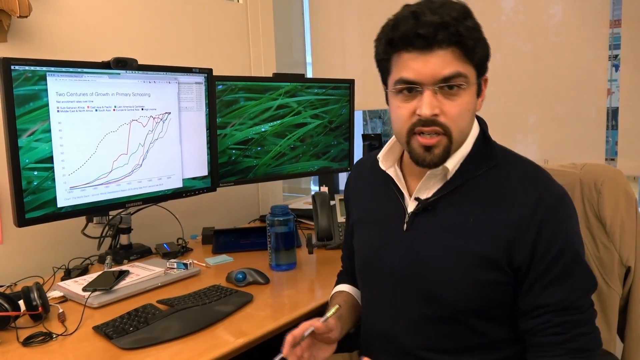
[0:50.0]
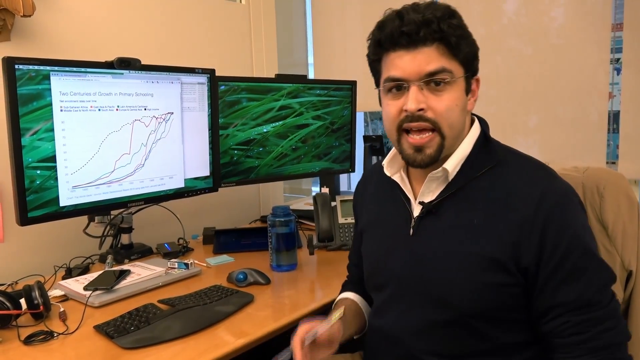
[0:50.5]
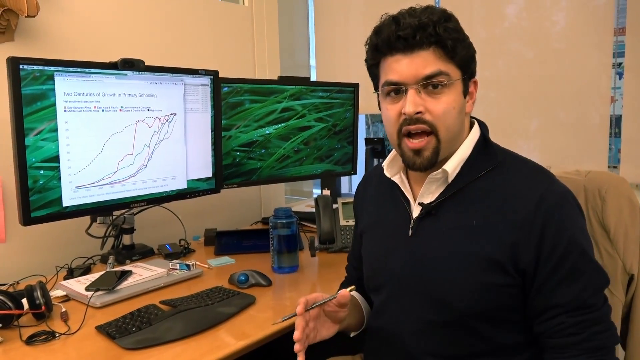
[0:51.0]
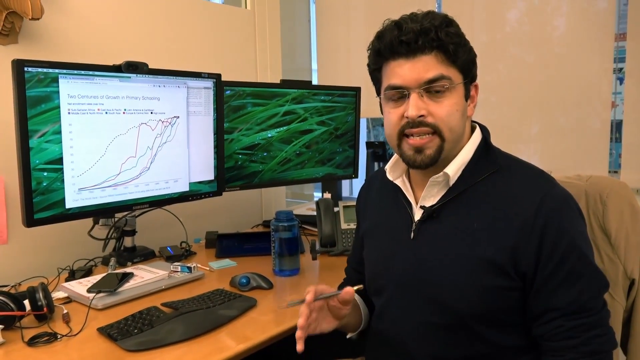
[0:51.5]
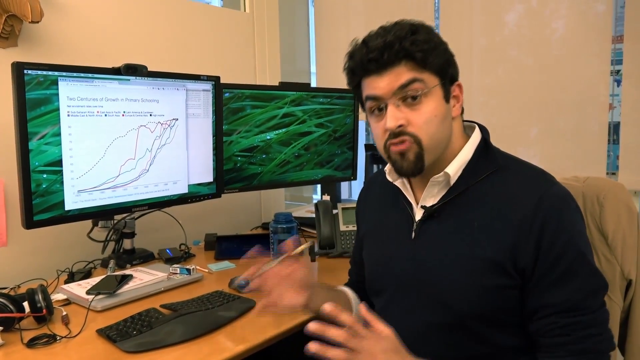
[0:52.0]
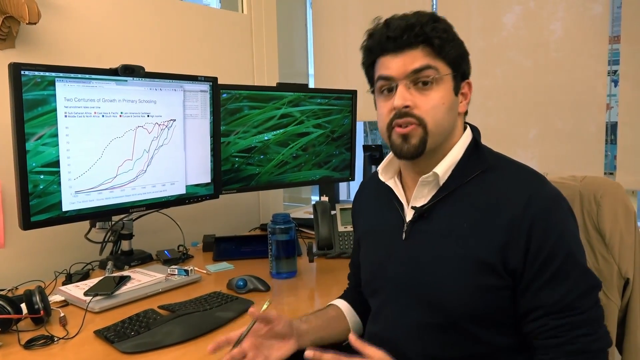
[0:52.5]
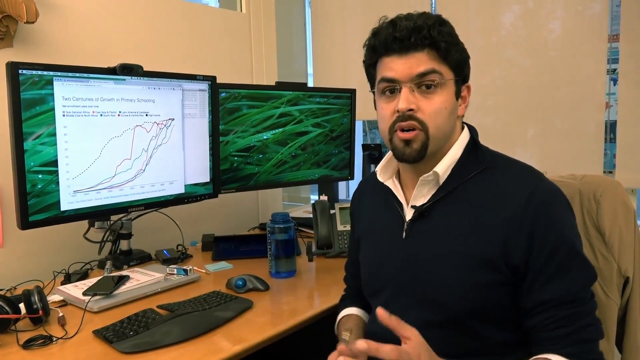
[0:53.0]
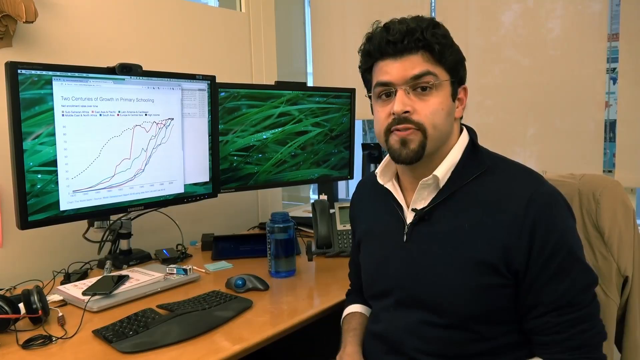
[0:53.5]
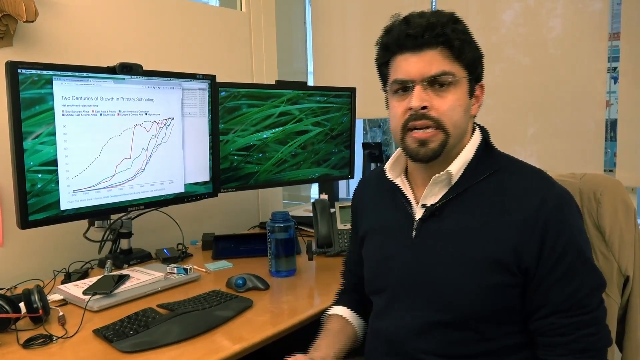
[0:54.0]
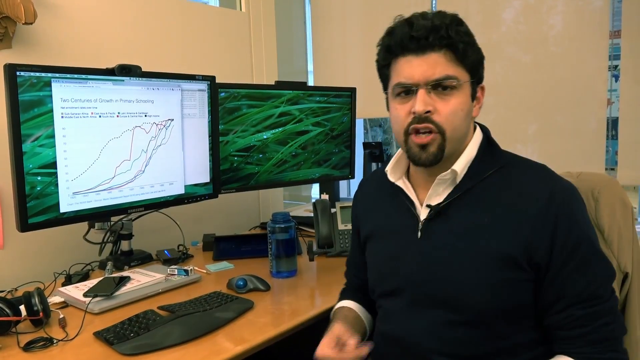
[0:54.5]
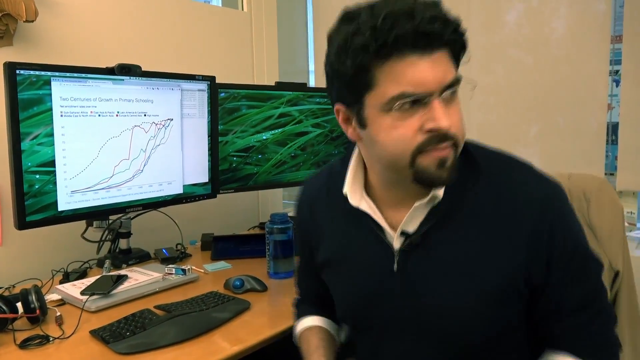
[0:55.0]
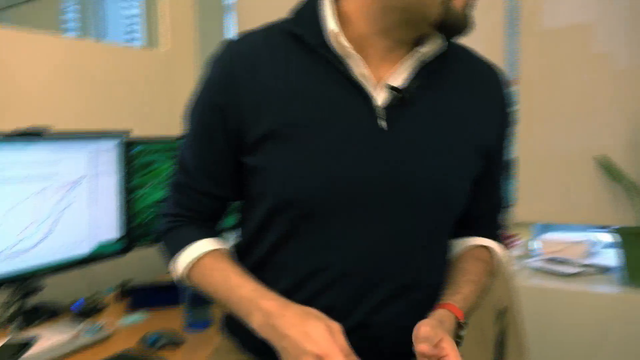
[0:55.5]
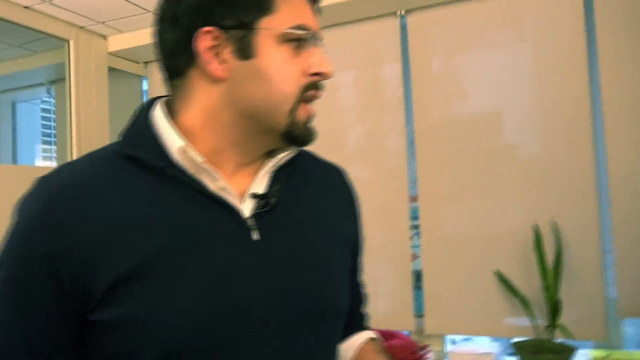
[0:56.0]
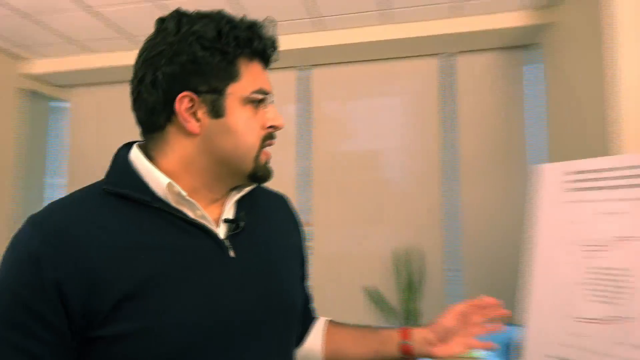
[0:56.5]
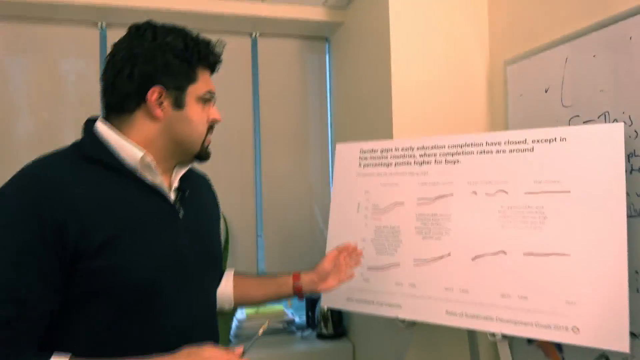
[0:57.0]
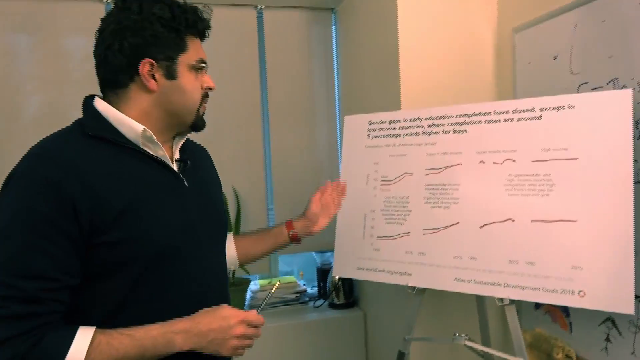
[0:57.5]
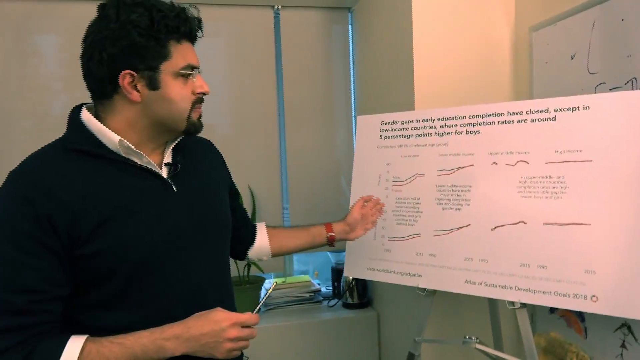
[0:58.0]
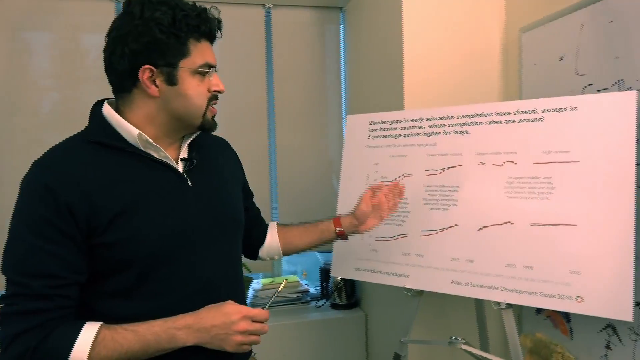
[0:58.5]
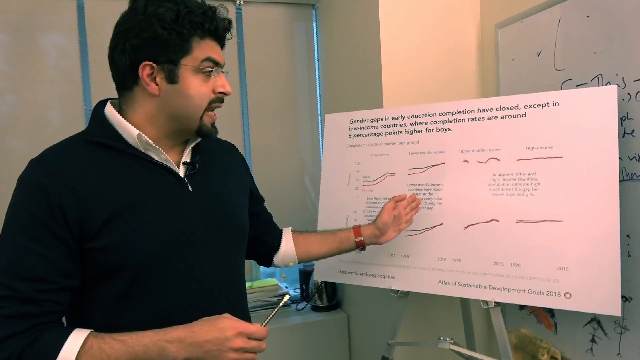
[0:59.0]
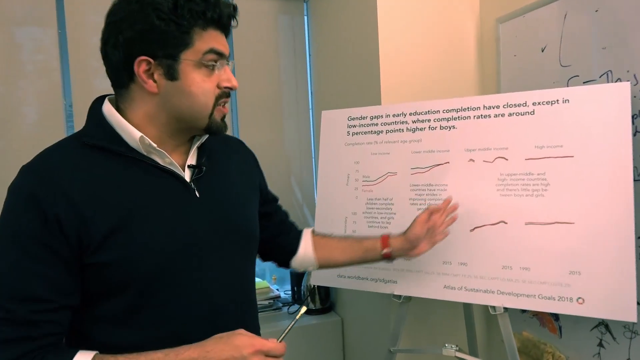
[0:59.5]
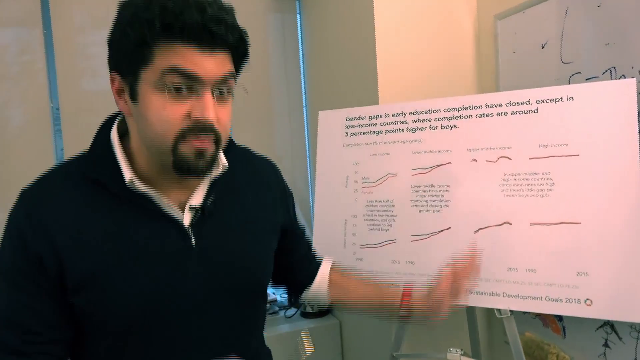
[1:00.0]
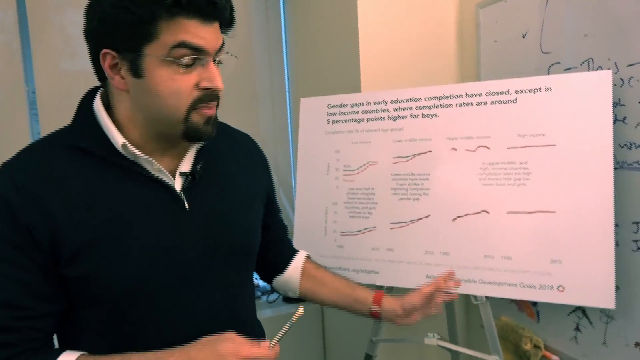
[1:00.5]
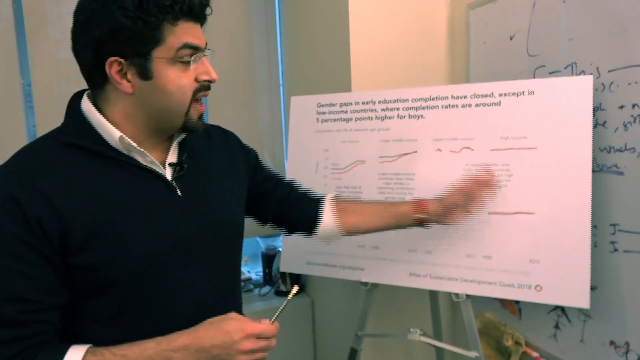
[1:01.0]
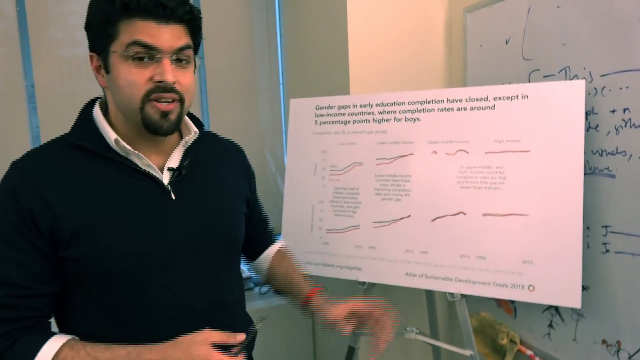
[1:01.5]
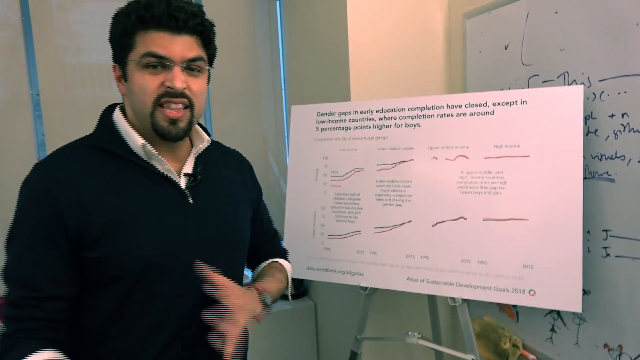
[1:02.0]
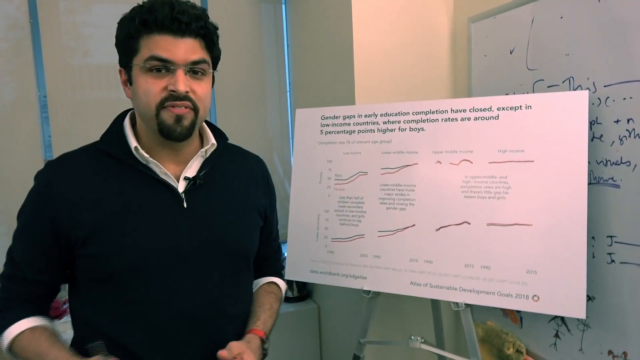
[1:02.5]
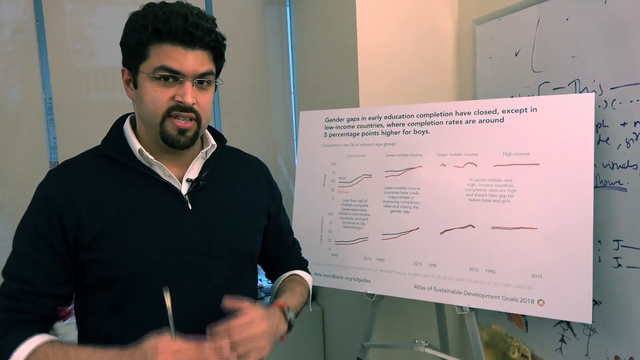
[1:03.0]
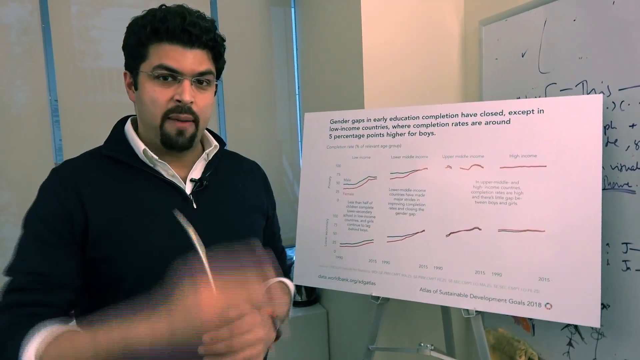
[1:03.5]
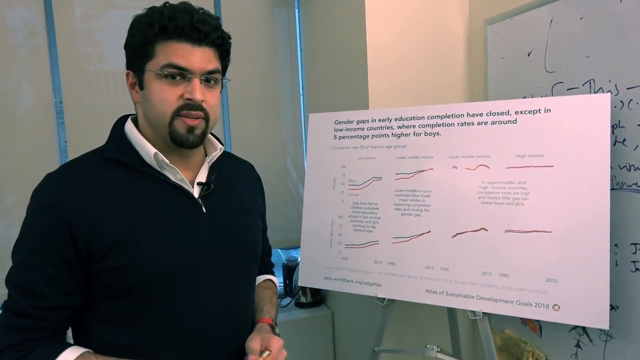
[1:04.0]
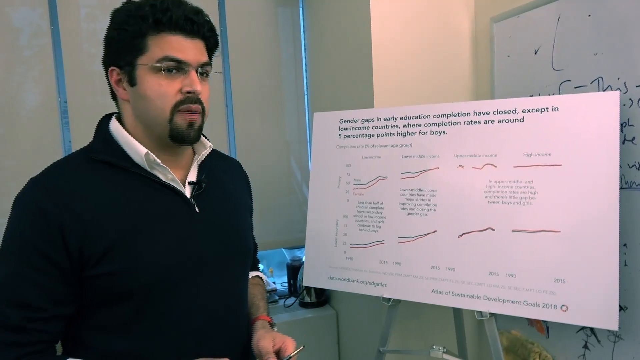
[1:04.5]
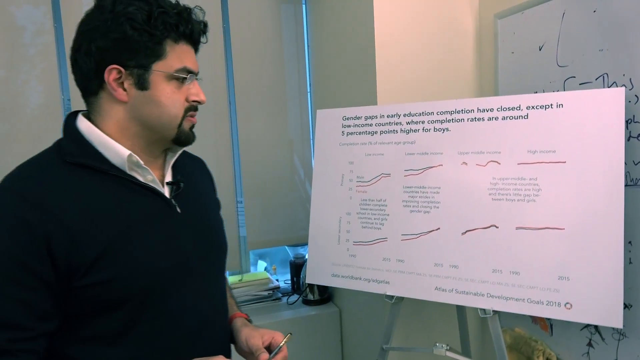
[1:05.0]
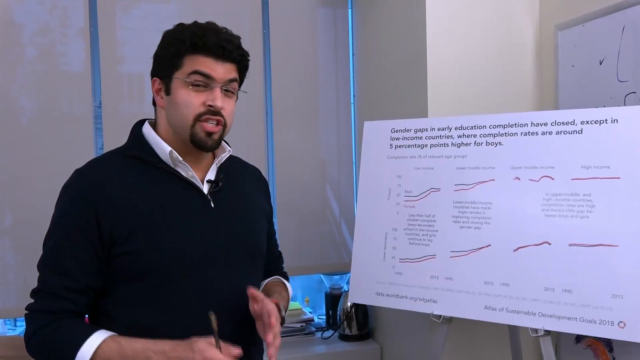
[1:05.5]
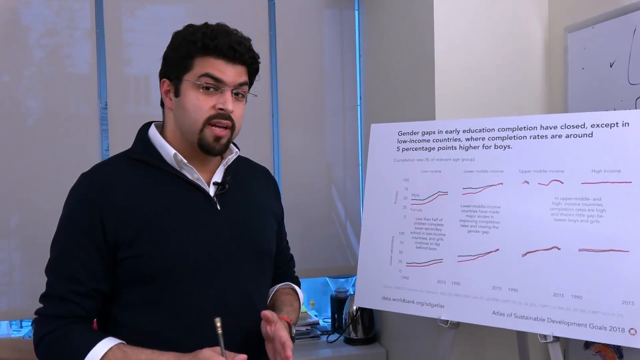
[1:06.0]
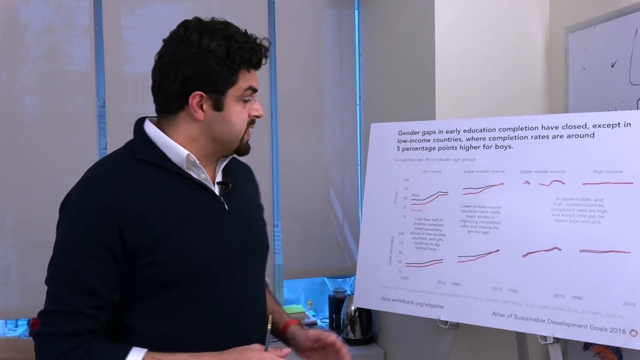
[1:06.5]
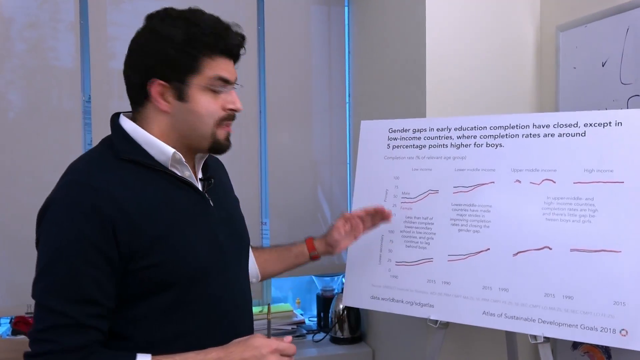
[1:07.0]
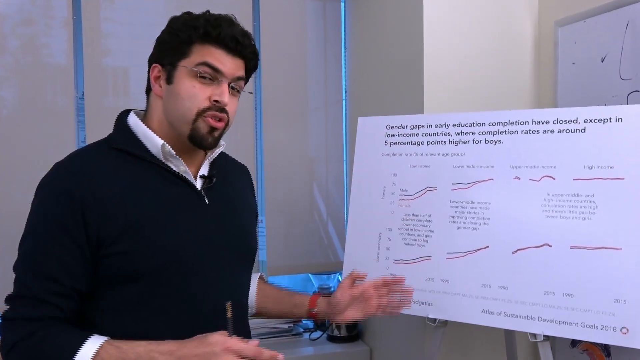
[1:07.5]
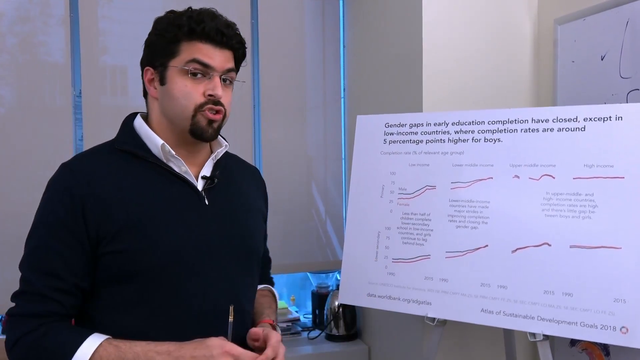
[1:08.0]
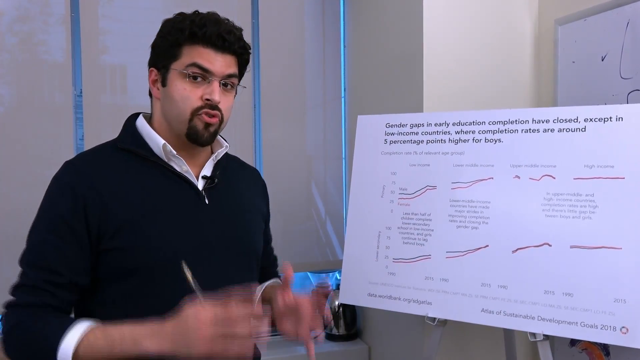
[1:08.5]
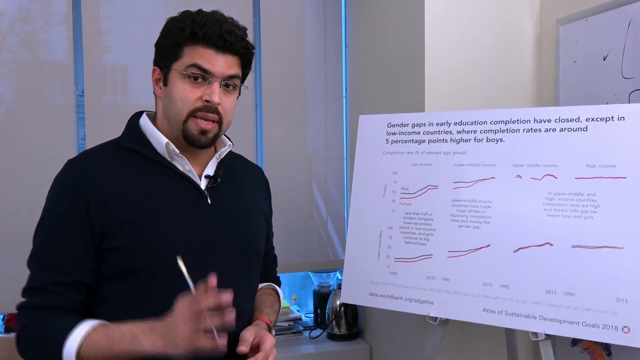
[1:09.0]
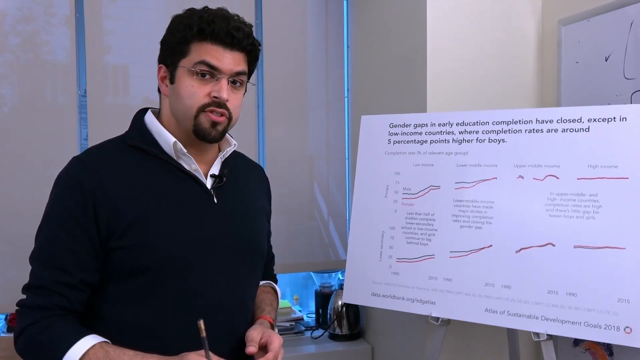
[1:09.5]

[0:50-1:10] The man, who was sitting at the computer explaining the graph, stands up abruptly and goes to a smaller paperboard, on which he apparently has written out four different explanations or formulas by hand. The camera follows him from the kitchen to an office. He is very animated, using hand gestures, and at times looks like he is pounding his hands; he appears passionate. The camera kind of pans right.